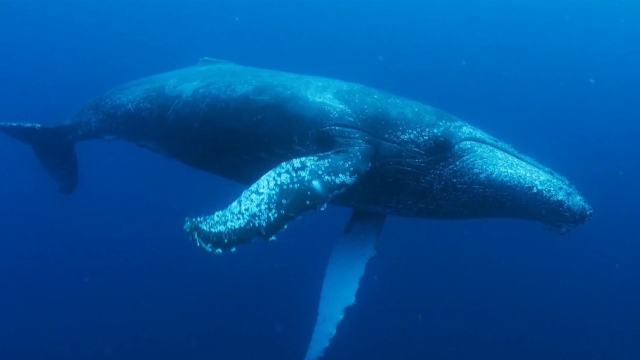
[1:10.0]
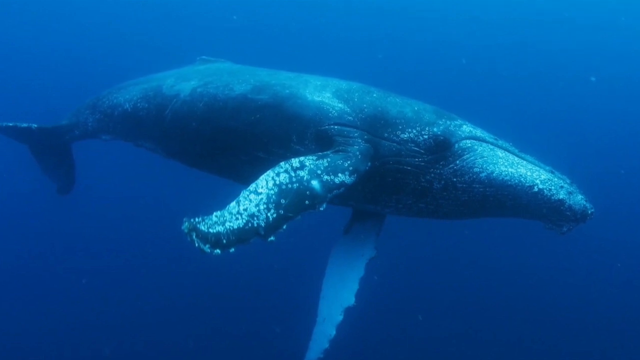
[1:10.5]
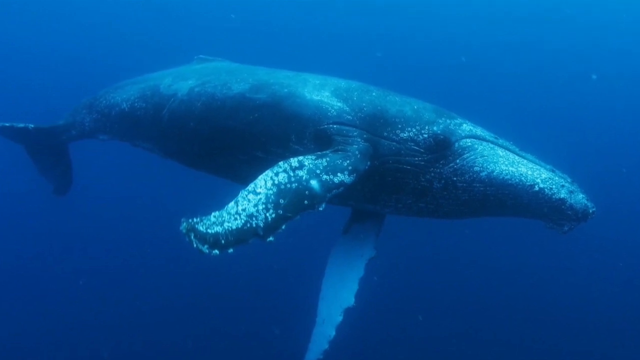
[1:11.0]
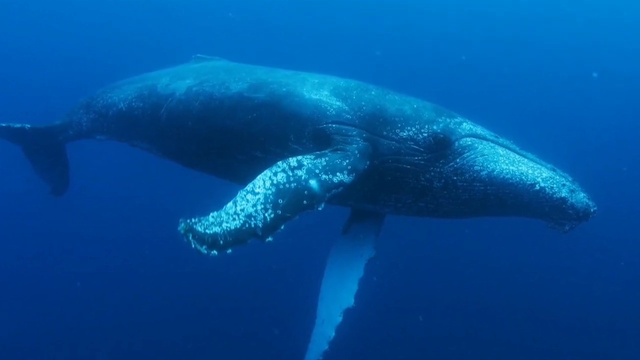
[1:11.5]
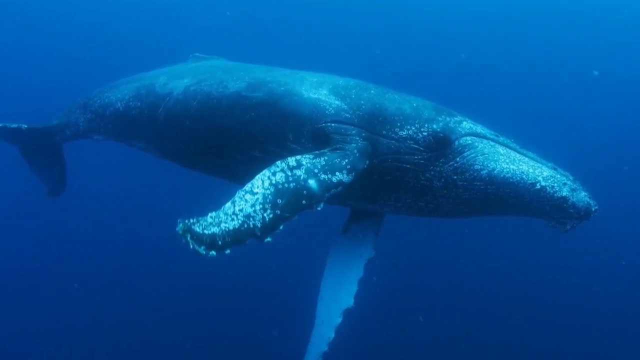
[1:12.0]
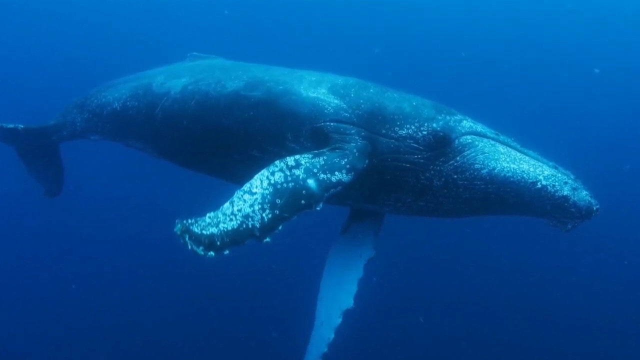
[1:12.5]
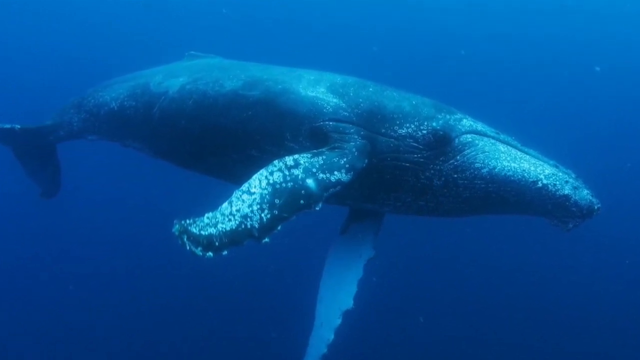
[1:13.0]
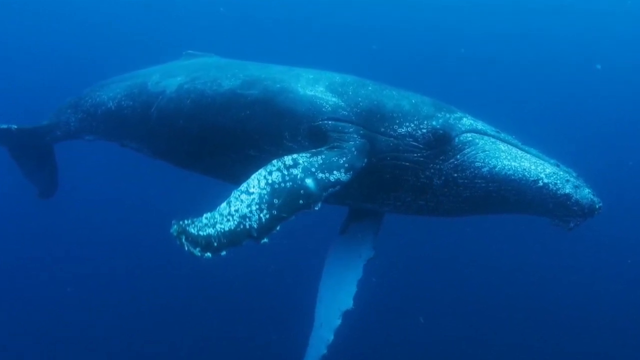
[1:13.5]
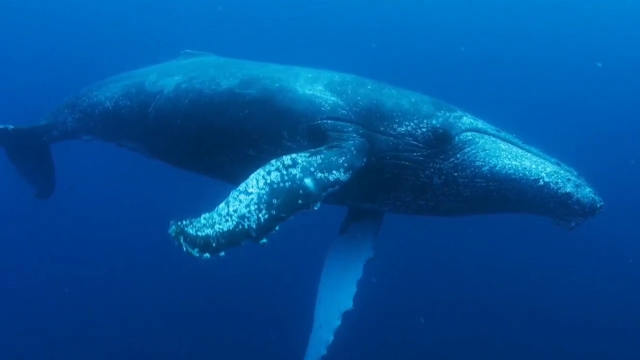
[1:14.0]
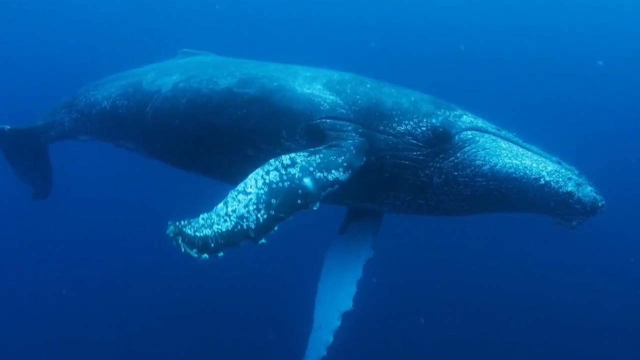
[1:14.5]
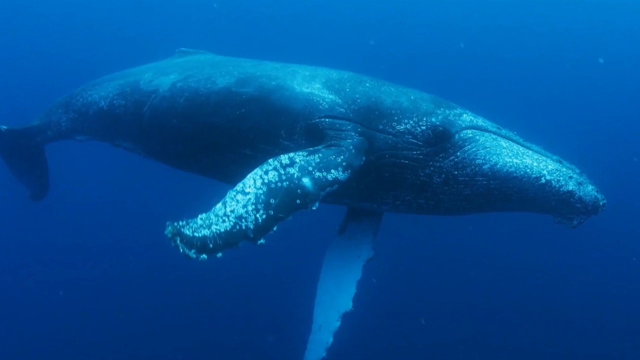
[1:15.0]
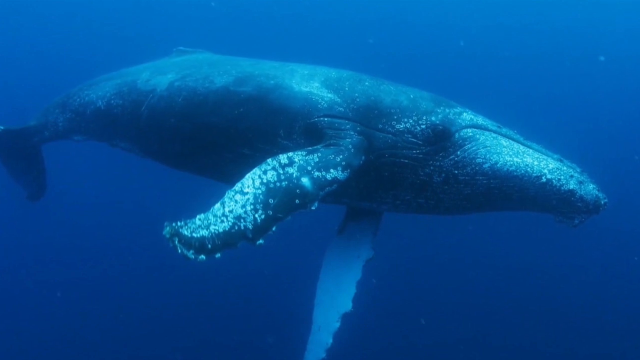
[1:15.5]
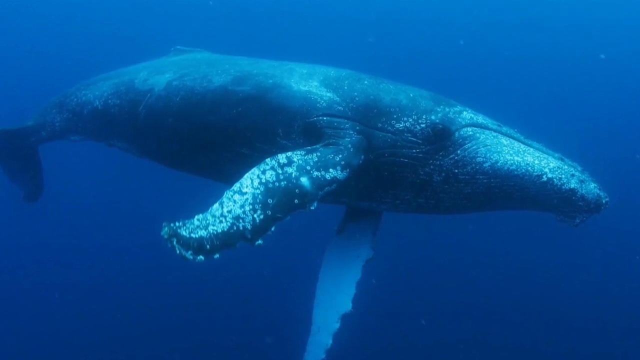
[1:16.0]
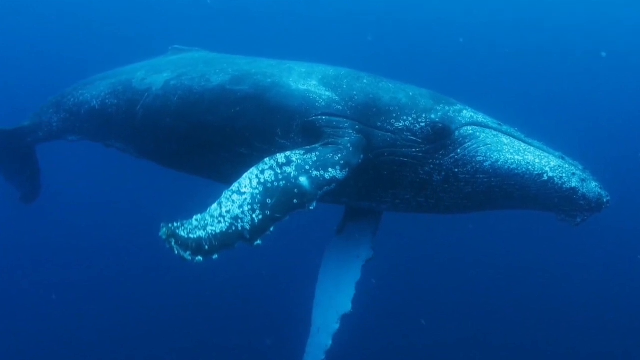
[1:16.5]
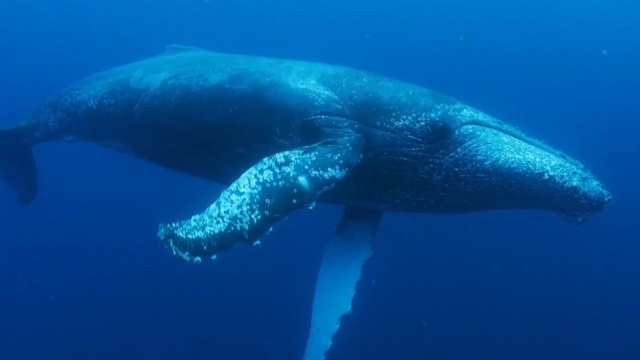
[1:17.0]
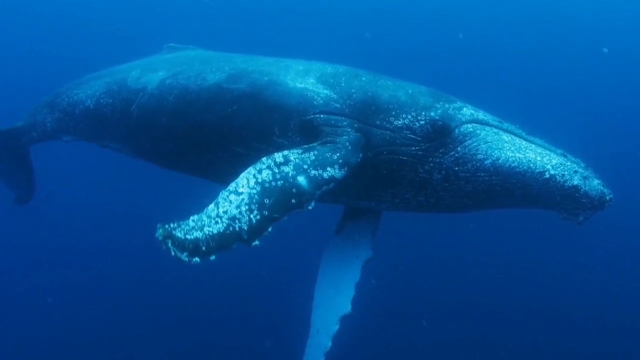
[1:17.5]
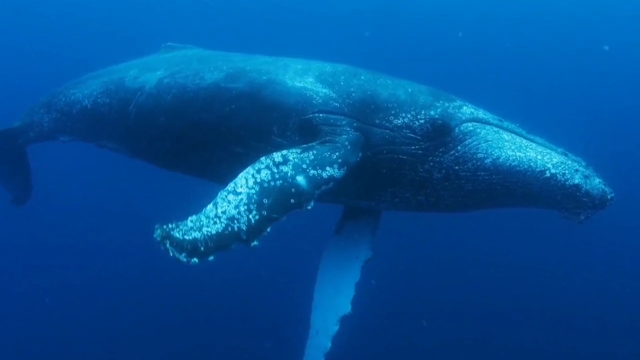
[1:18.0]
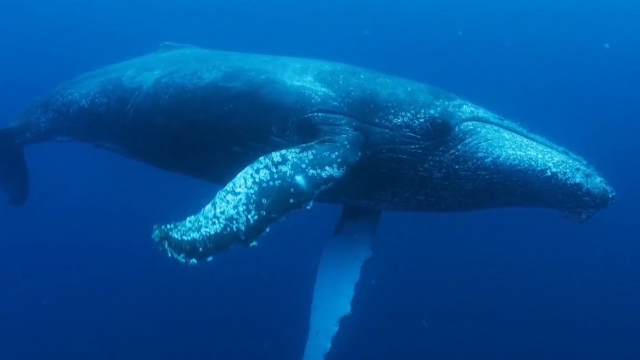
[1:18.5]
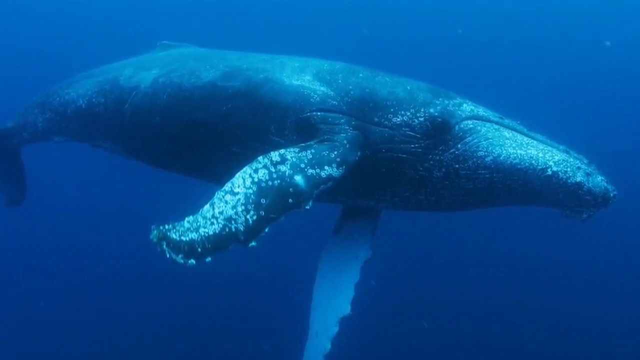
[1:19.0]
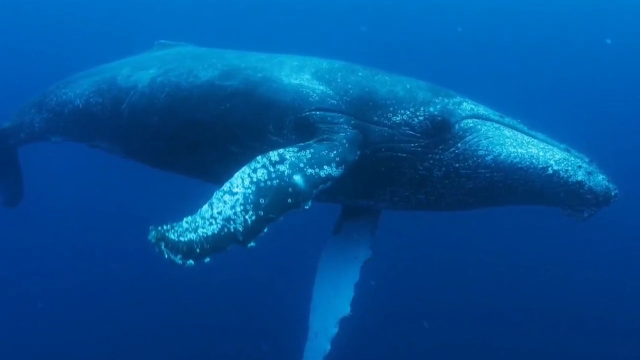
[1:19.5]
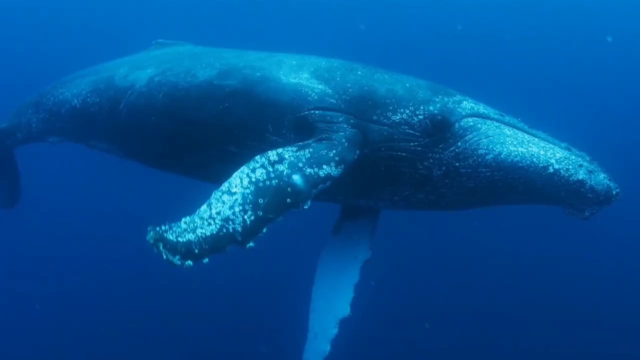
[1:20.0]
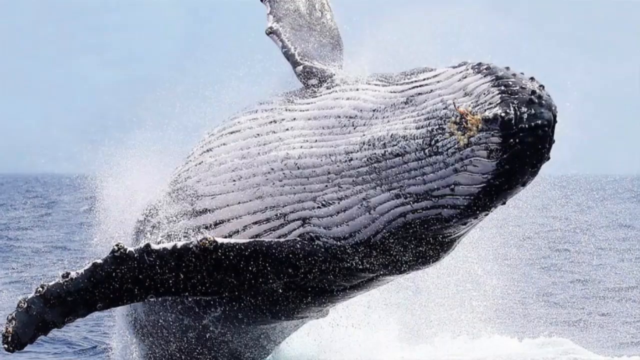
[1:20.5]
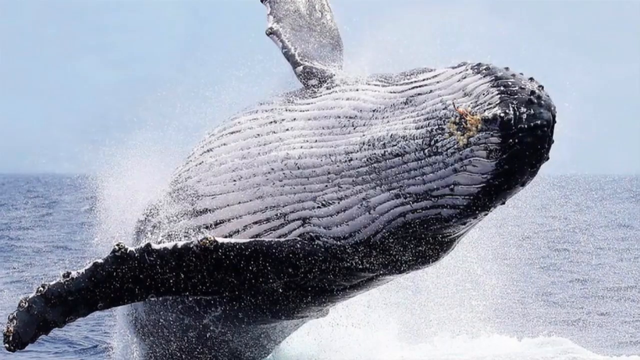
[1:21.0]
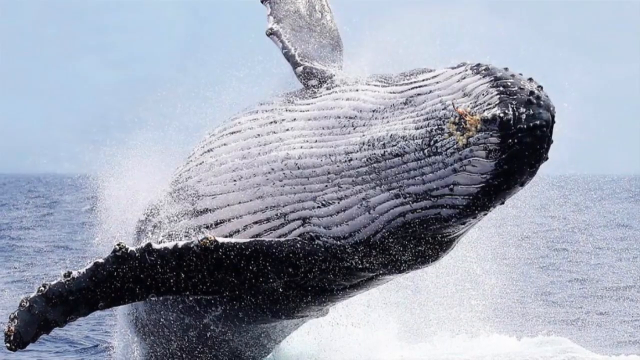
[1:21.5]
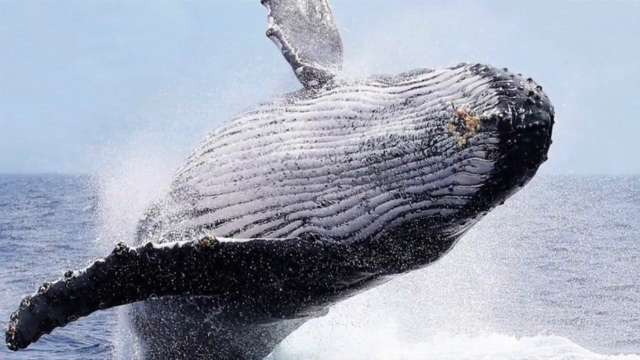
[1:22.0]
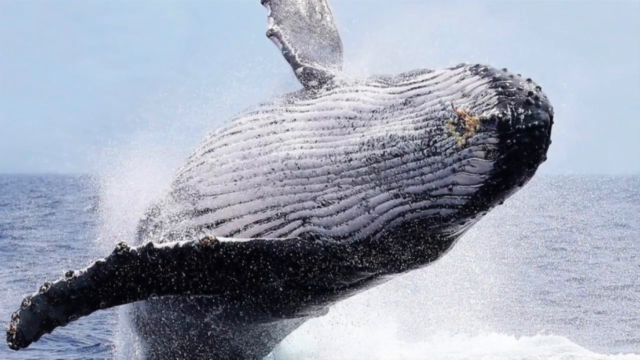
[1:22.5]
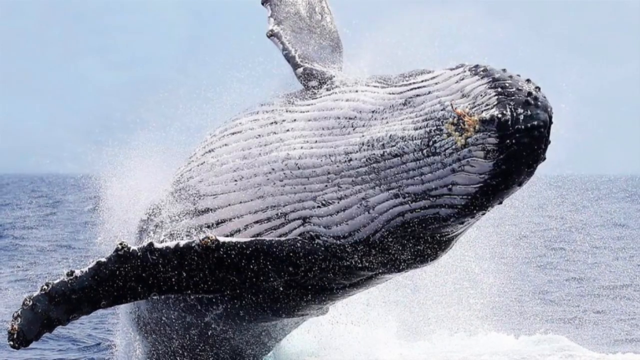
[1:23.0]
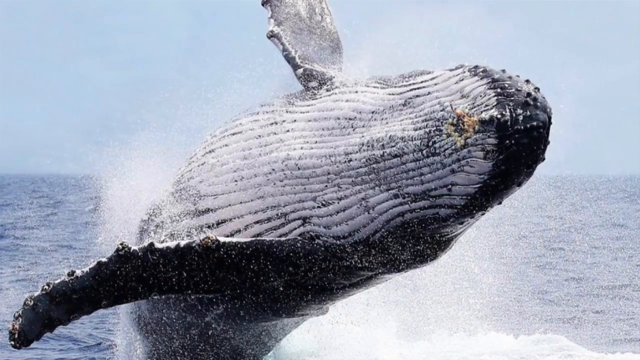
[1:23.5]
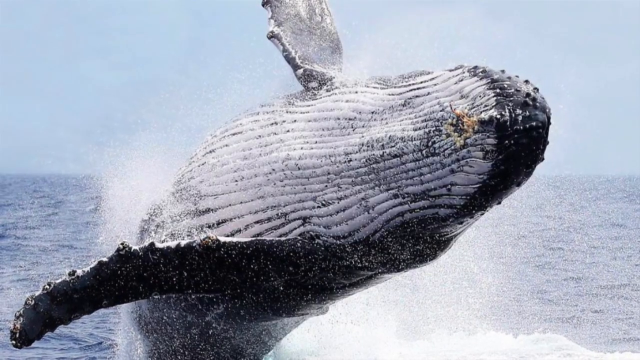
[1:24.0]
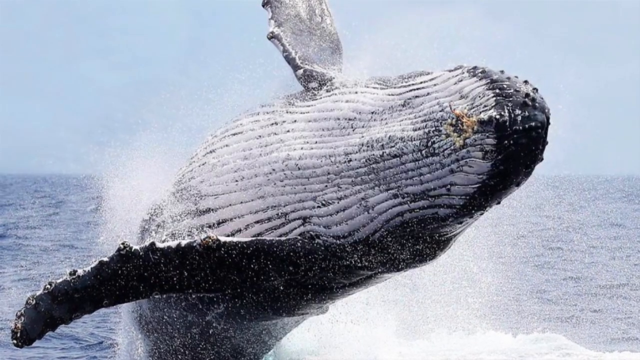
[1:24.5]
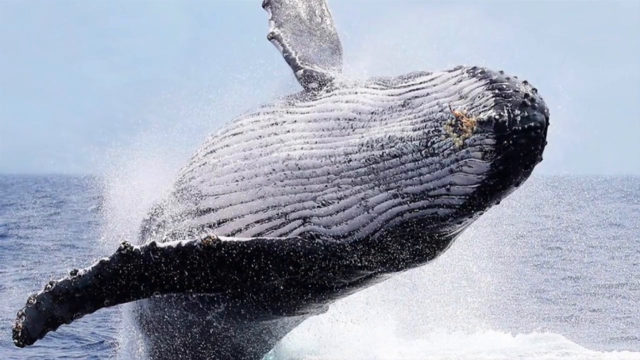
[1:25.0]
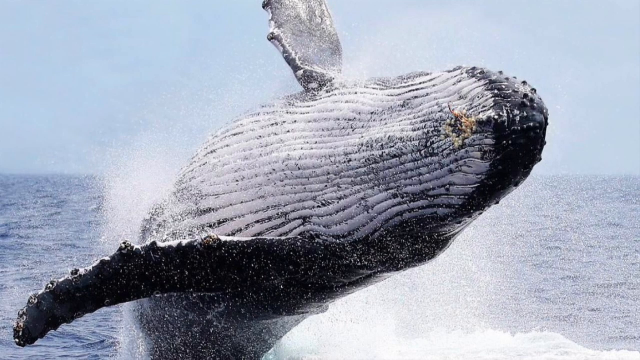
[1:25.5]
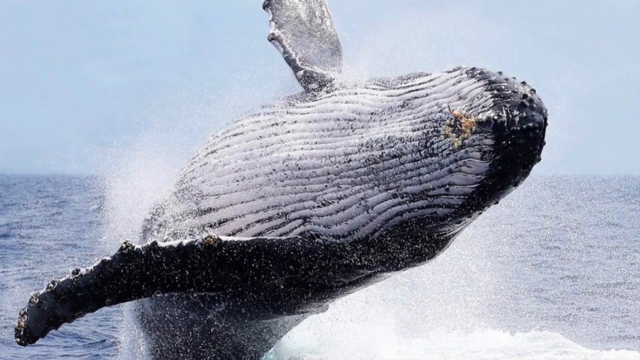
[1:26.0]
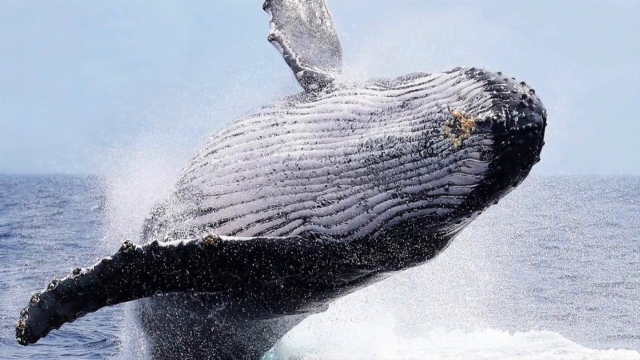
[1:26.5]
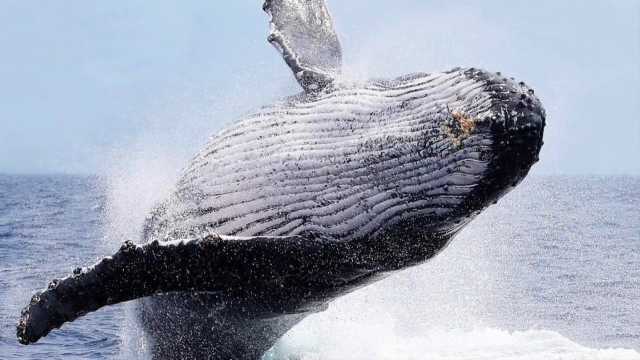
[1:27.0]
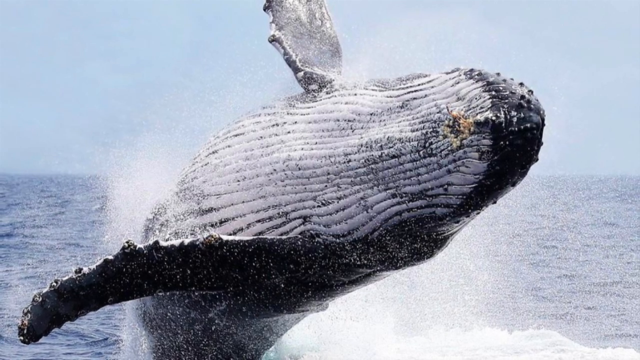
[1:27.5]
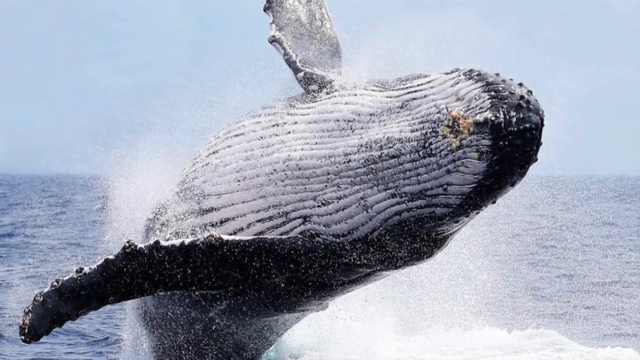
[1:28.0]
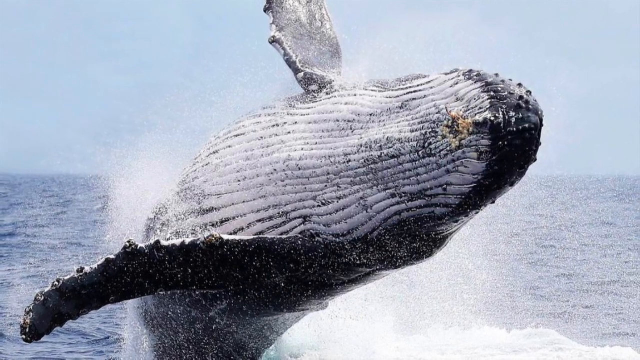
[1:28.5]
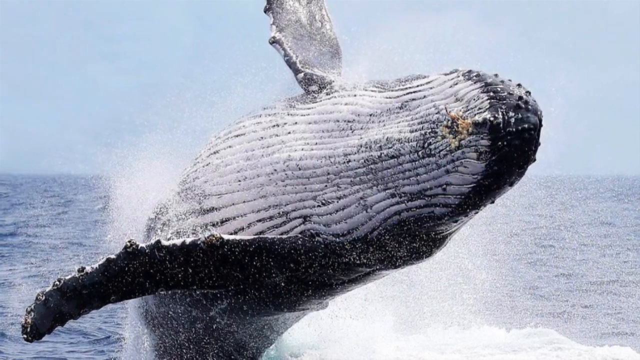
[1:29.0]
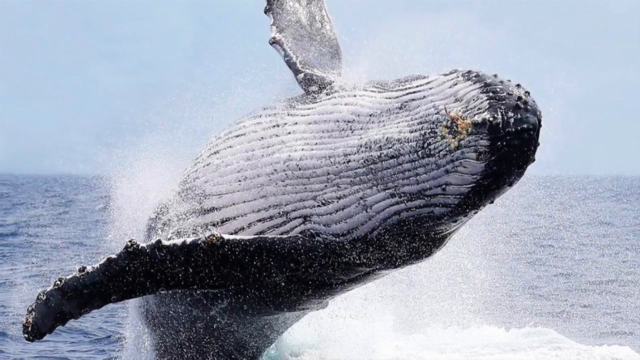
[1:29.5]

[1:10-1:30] A photograph shows a very large whale swimming underwater against a blue-black background. Some parts of the creature are very light blue, while the rest of its body is dark blue and black. The image approaches the camera very slowly, rotating counterclockwise. Another photograph appears, showing a whale outside the water touching the surface with its tail, and the framing makes a sort of reverse zoom. The whale's two black and white fins are visible in the upper and lower parts of the frame. In the background, the sky occupies the upper half of the frame and the sea water the lower half.